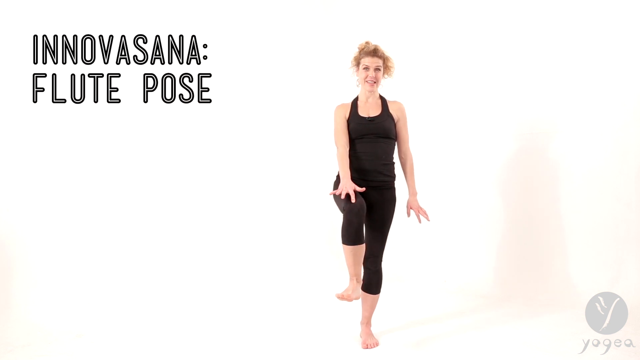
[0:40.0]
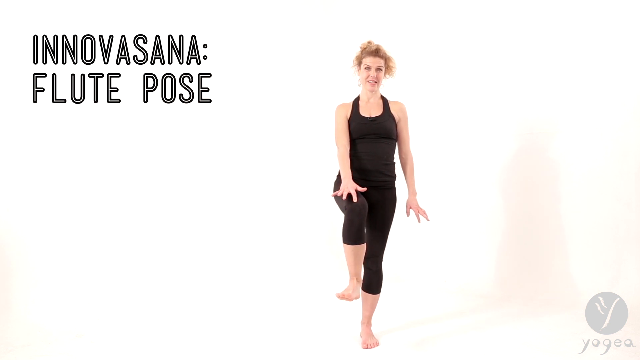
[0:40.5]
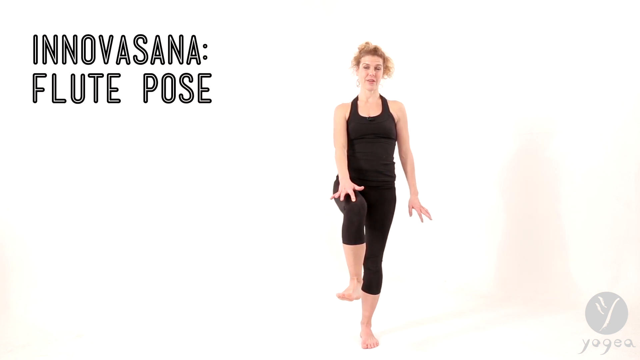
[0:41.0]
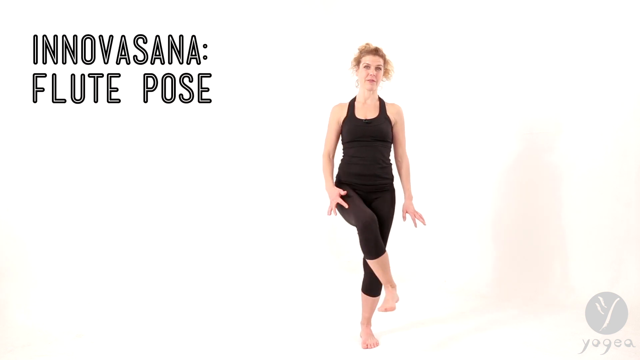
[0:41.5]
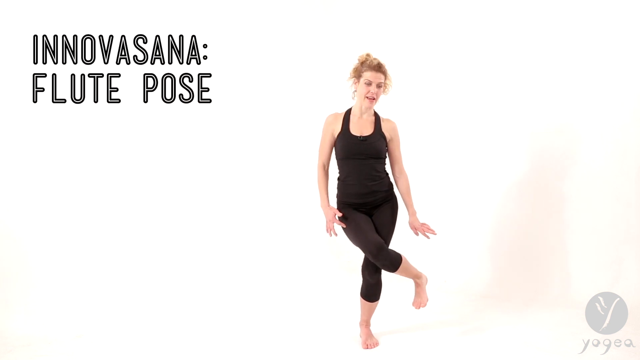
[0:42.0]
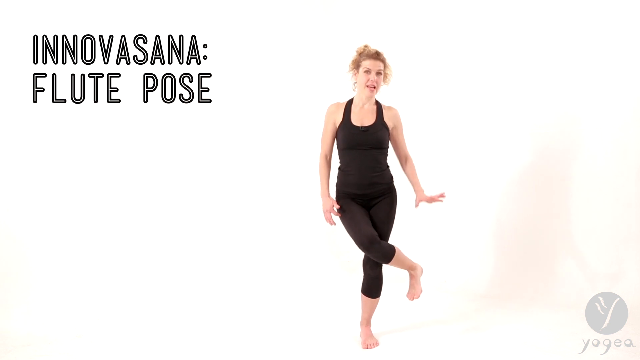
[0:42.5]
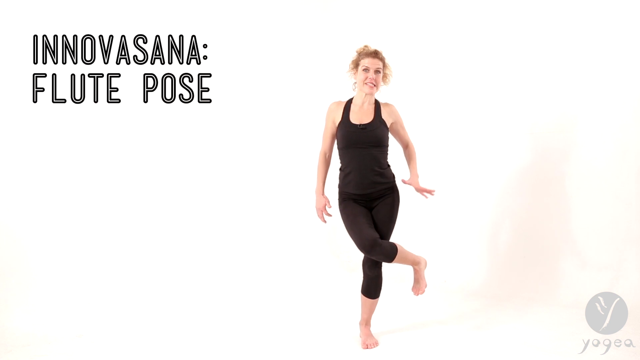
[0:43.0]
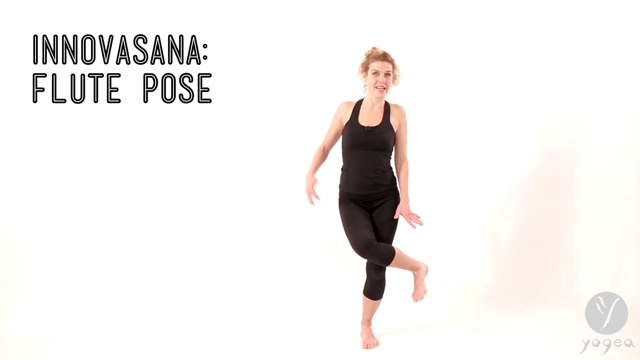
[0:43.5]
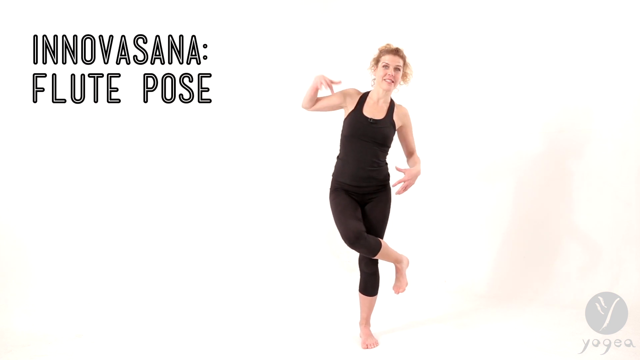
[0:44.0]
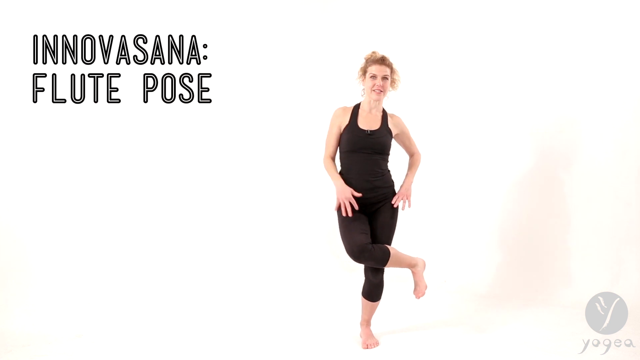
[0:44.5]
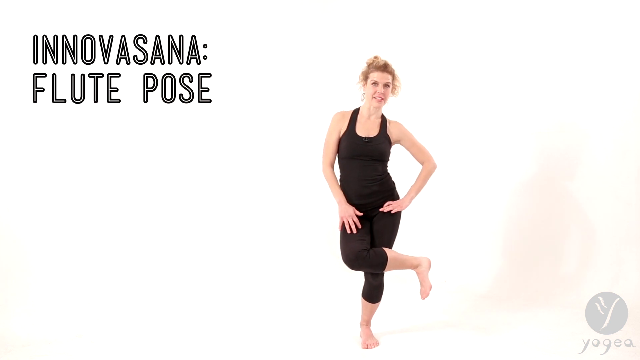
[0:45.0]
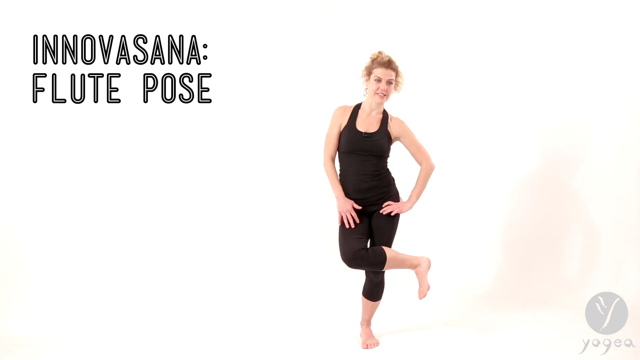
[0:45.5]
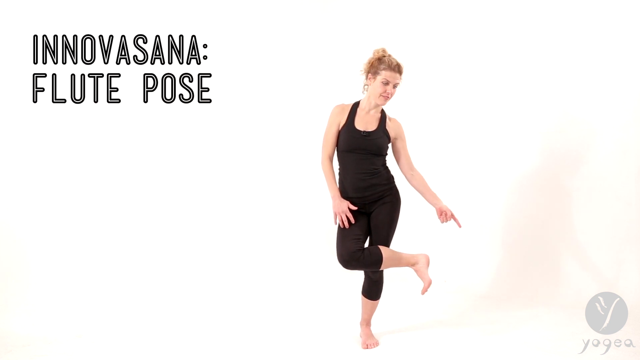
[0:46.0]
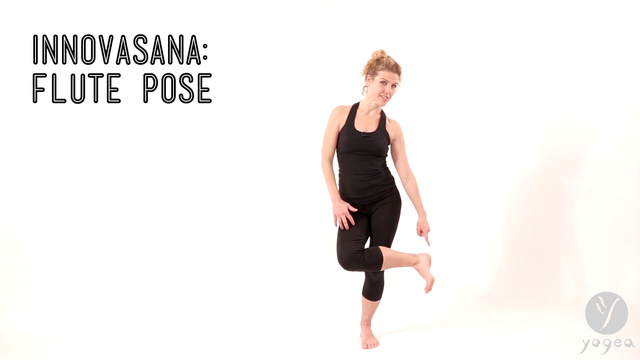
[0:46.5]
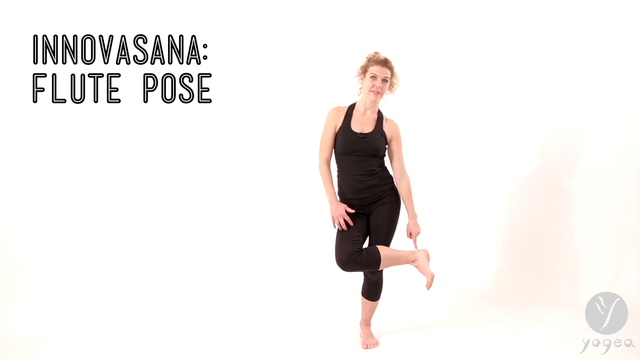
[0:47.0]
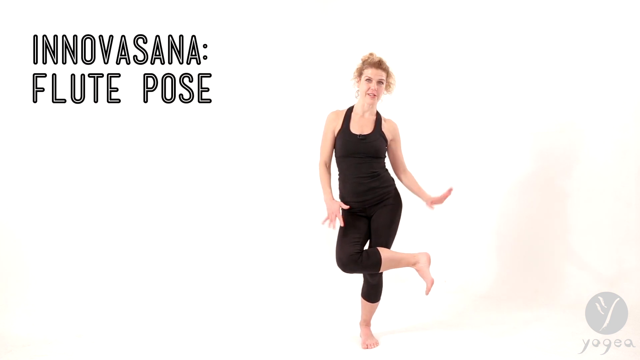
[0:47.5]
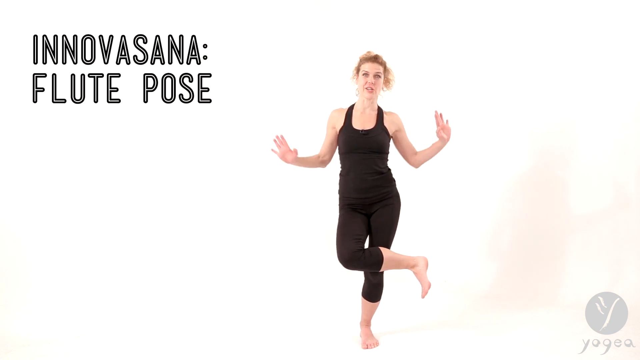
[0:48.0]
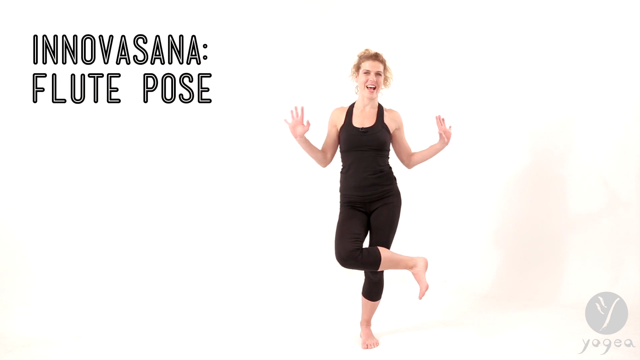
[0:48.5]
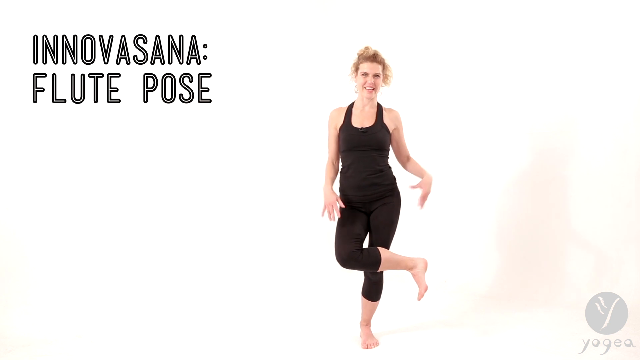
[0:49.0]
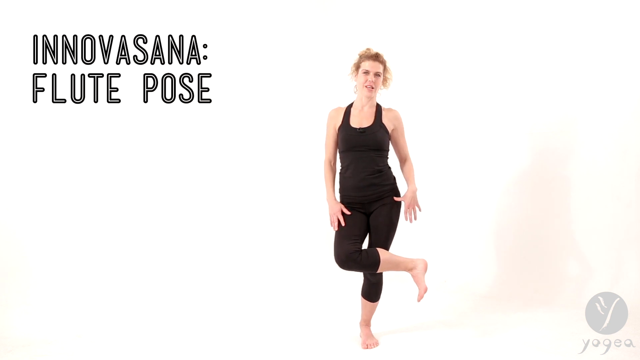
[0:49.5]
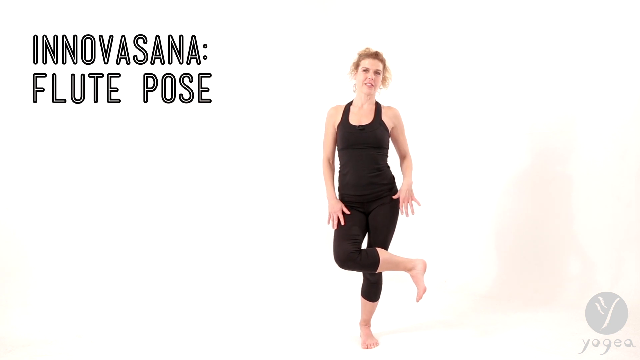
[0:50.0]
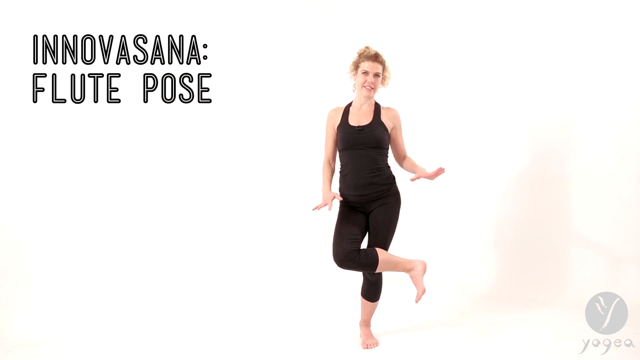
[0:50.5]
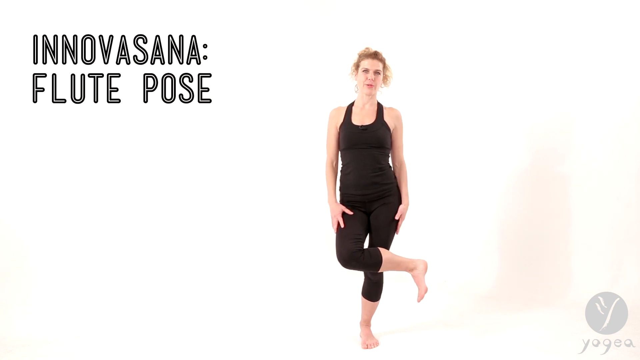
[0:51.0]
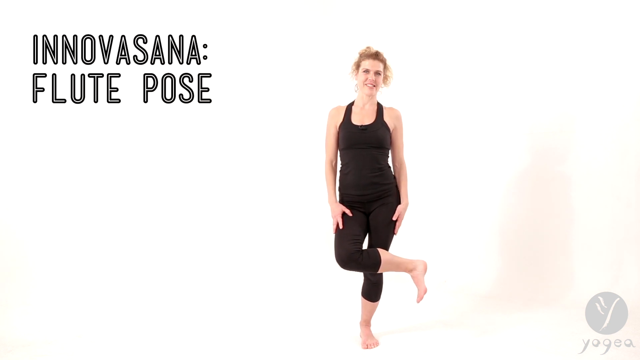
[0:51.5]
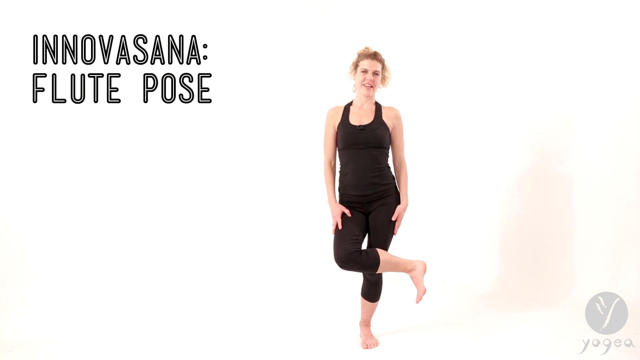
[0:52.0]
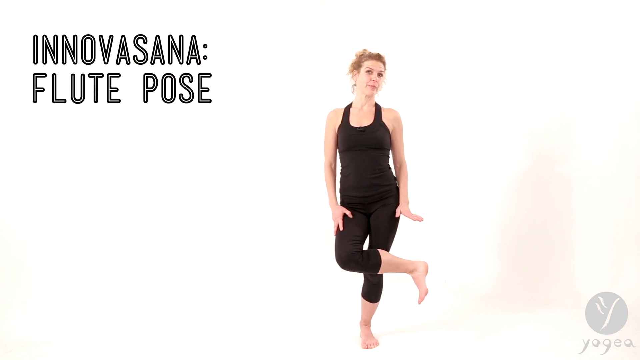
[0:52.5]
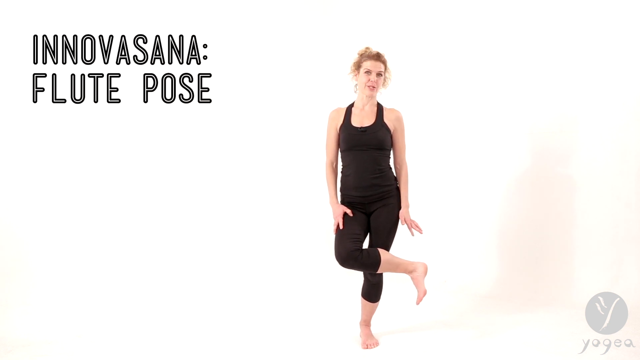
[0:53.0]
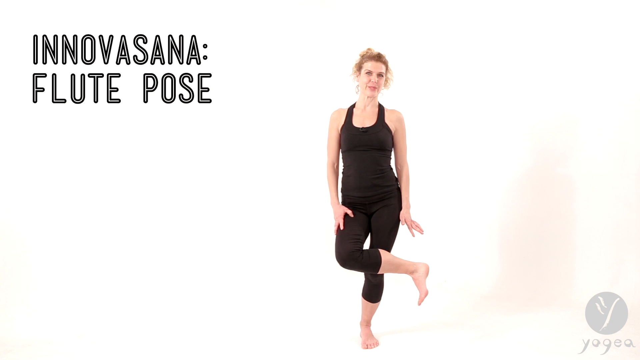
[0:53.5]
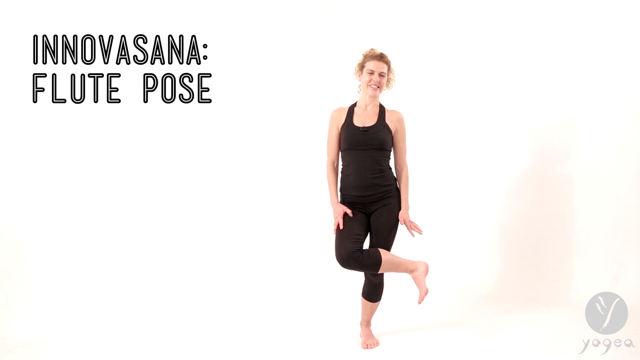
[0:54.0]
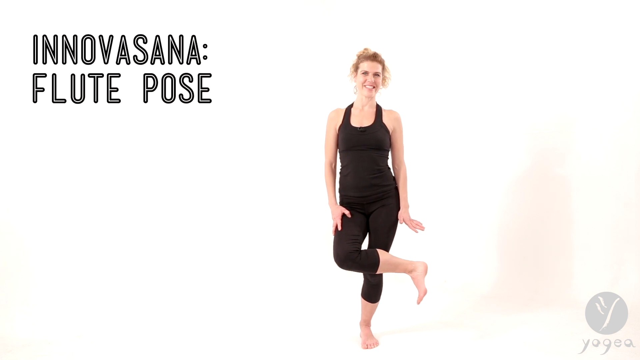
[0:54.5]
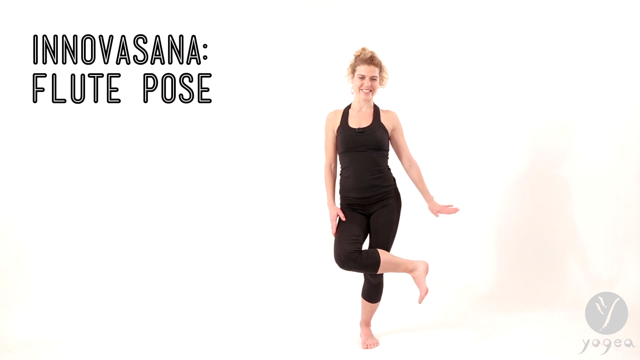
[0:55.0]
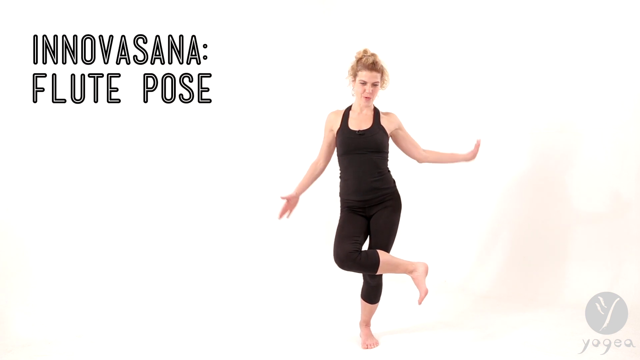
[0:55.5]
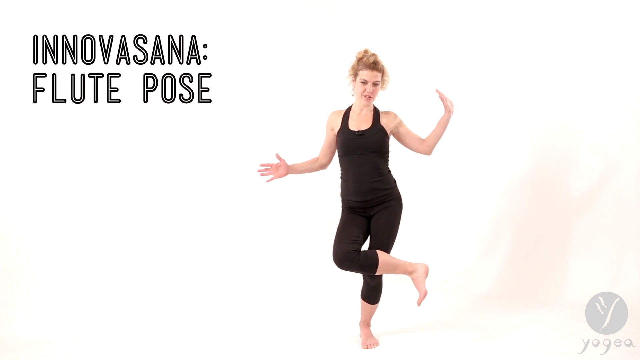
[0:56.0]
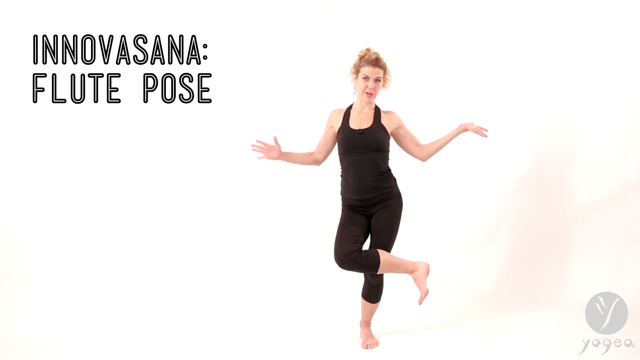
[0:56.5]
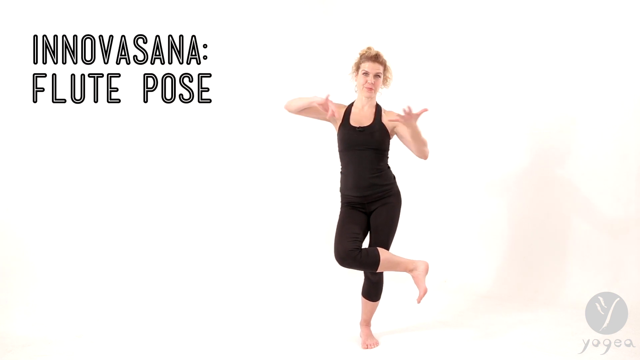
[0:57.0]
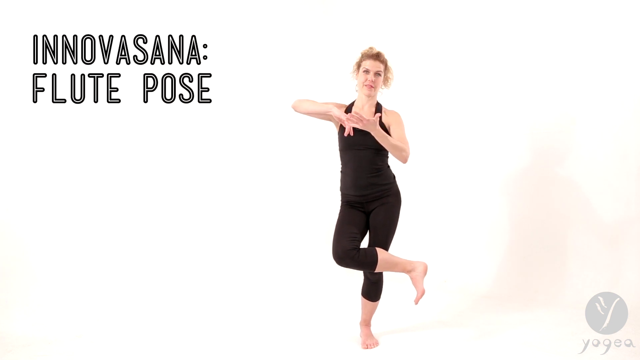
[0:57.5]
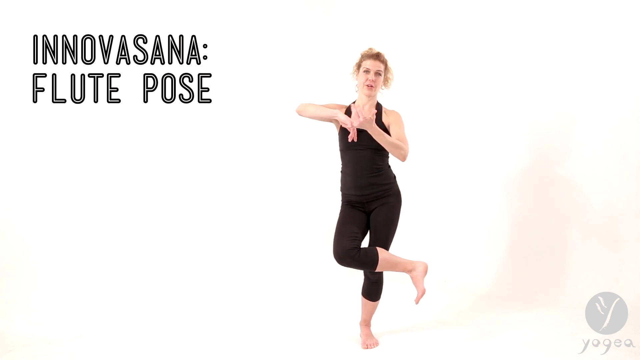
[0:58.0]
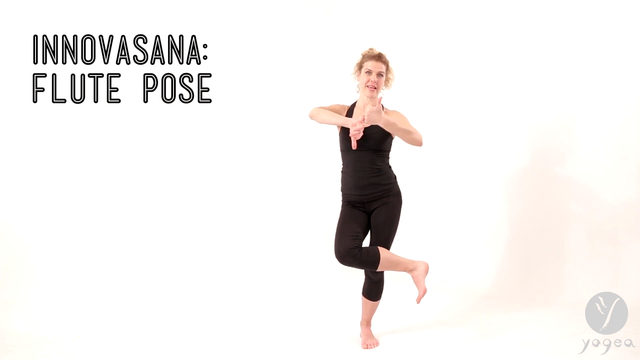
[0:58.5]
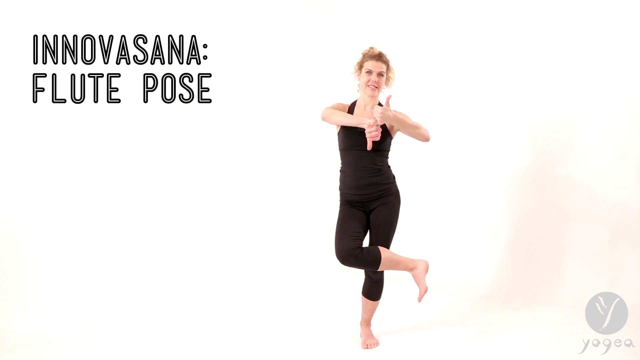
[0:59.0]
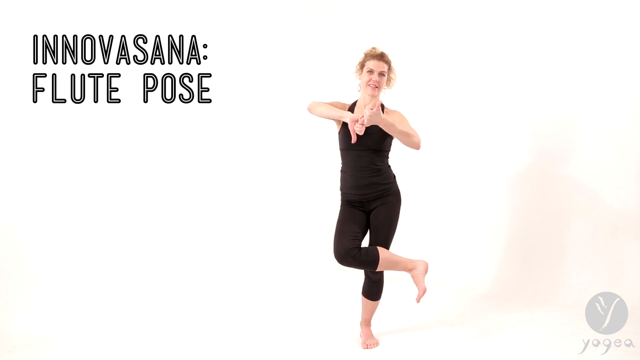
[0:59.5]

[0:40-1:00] The woman stands in the completely white studio in her black leotard, with her right leg lifted off the floor and her right hand on the knee of that leg. She bends the knee over so the leg crosses over her left leg, which is standing on the floor, and uses her hands to gesture and emphasize her words. She stretches both hands out to her sides, then brings them up in front of her body and lightly clasps her fingers together. She is doing a flute pose as part of a yoga routine, moving different parts of her body and placing her hands on her hips and on her legs. She puts her hands out beside her as if balancing herself, then brings them together in front of her and kind of clasps her fingers while standing in the flute pose and speaking.